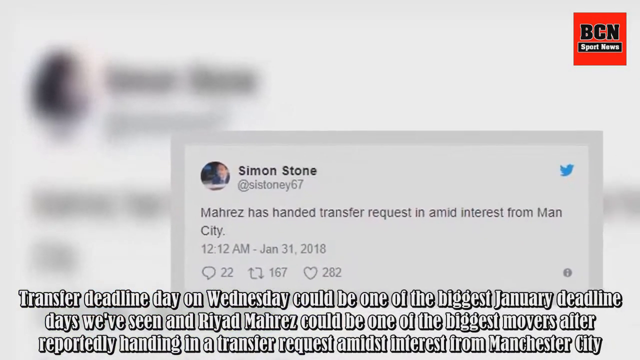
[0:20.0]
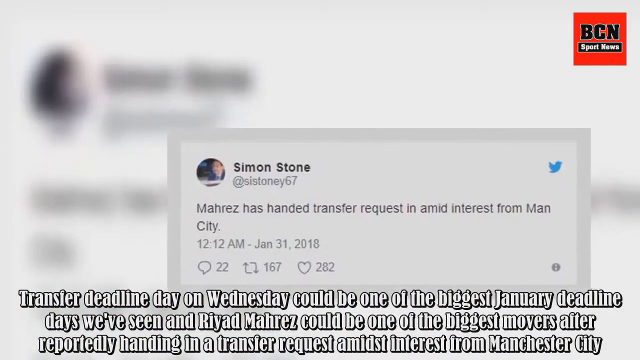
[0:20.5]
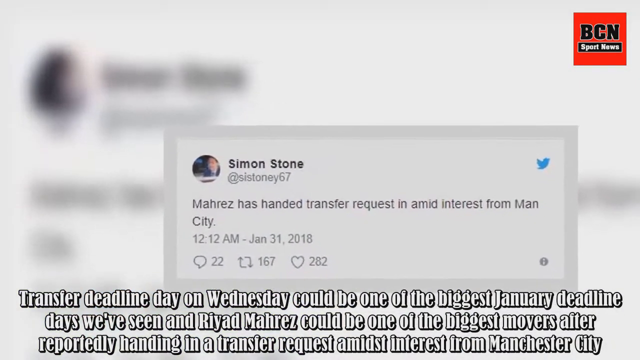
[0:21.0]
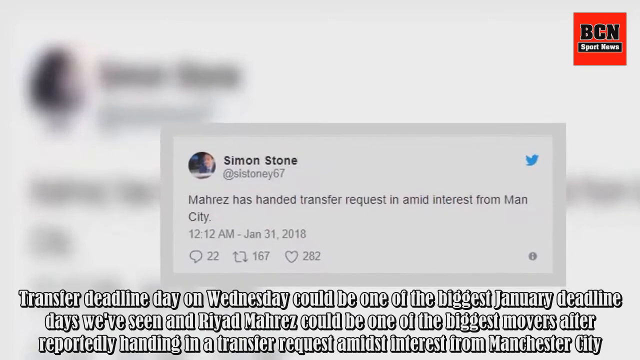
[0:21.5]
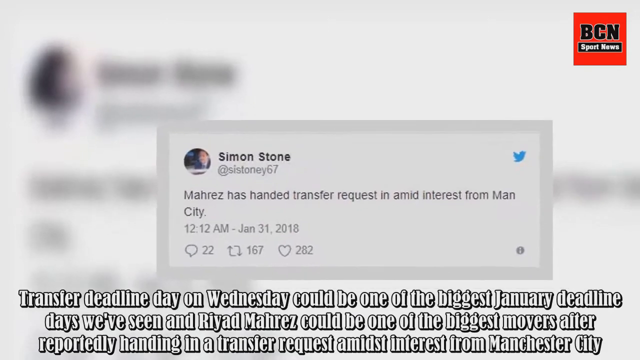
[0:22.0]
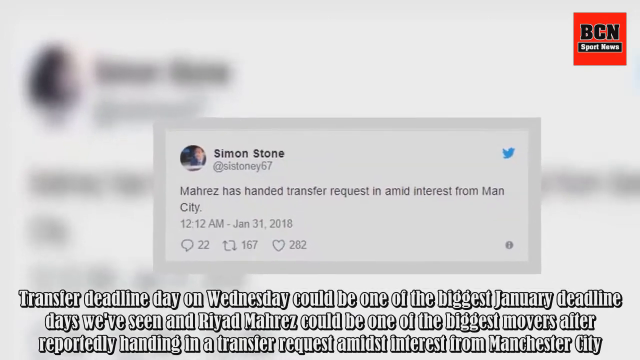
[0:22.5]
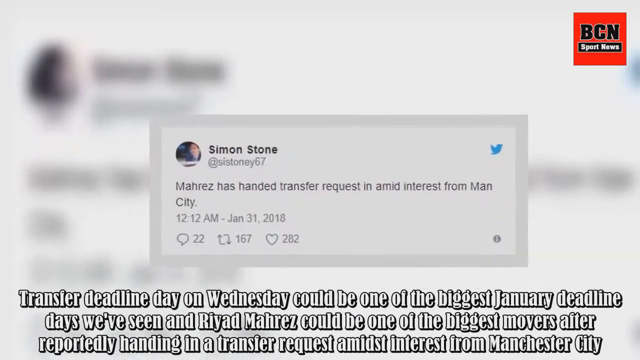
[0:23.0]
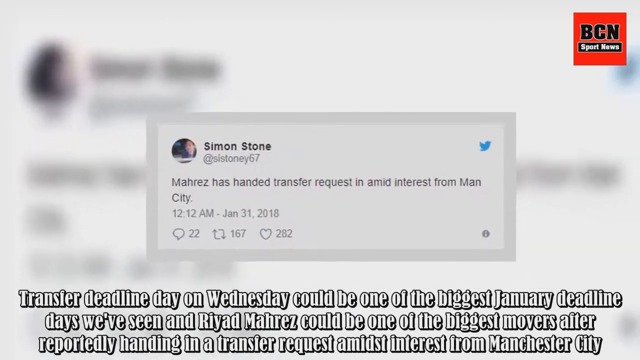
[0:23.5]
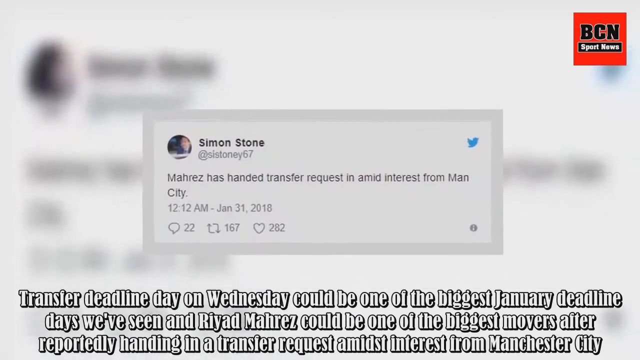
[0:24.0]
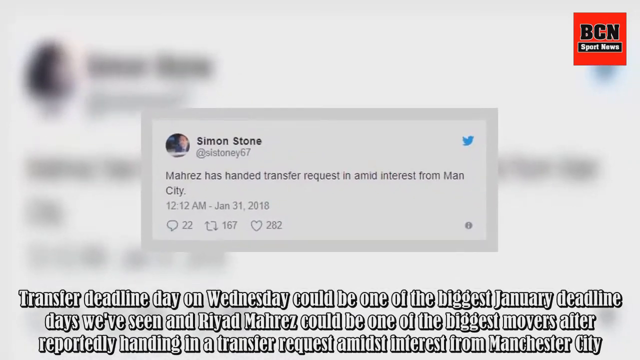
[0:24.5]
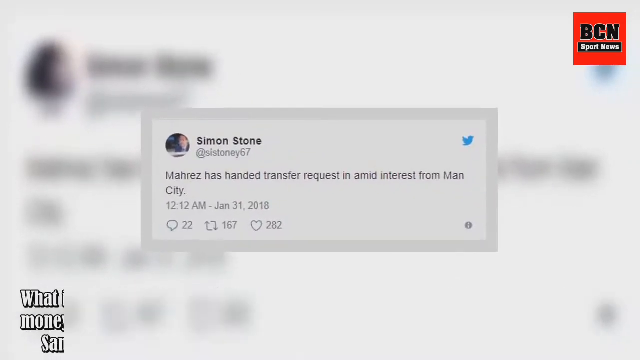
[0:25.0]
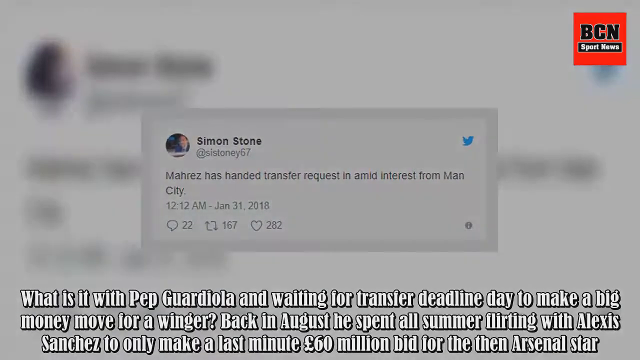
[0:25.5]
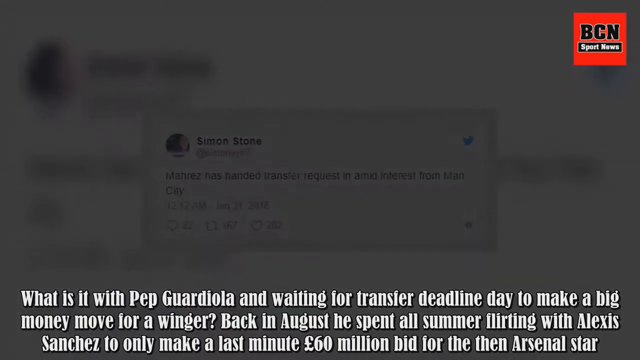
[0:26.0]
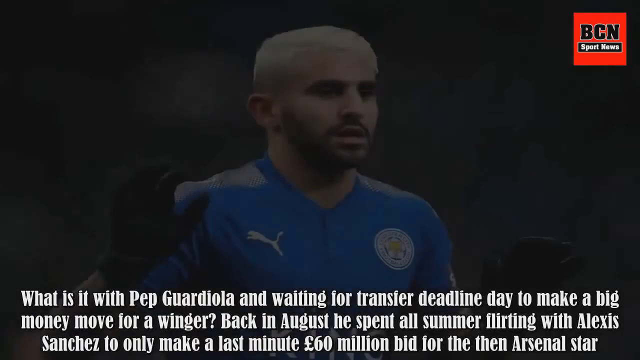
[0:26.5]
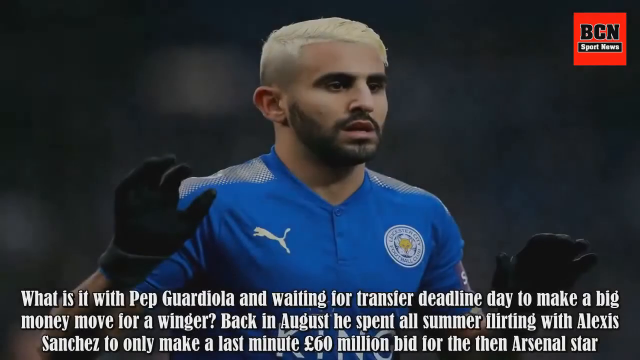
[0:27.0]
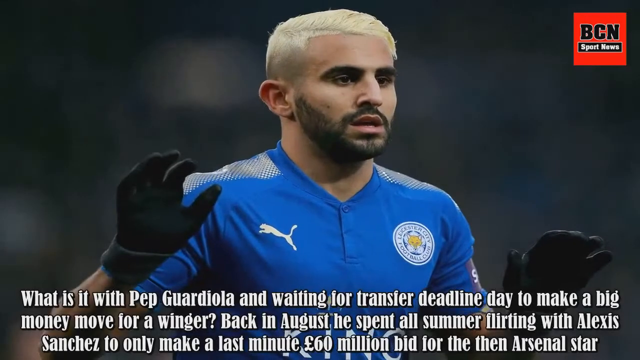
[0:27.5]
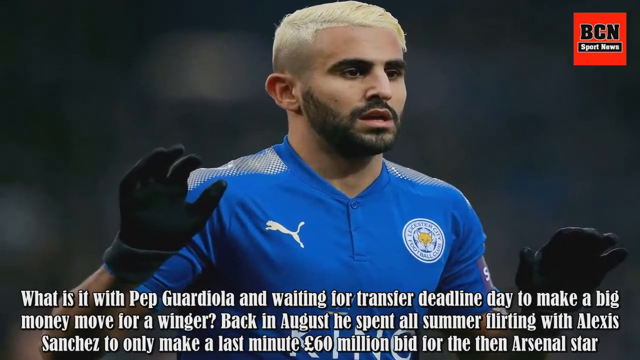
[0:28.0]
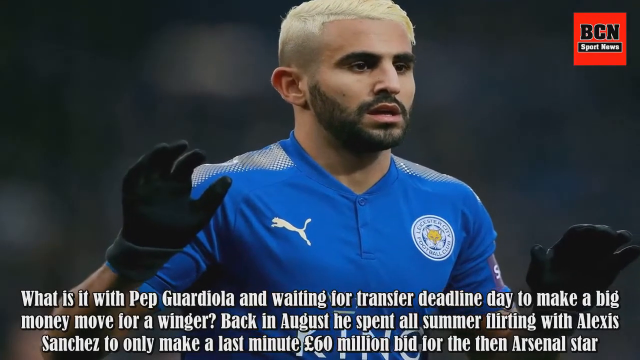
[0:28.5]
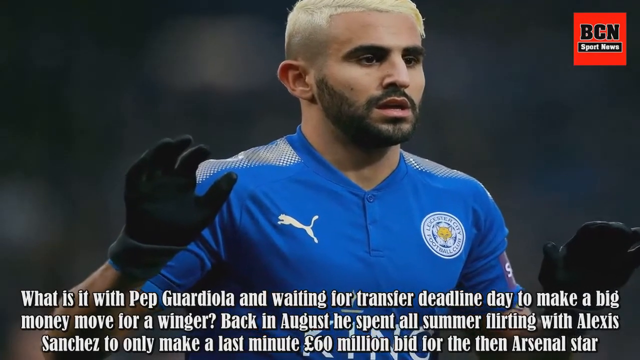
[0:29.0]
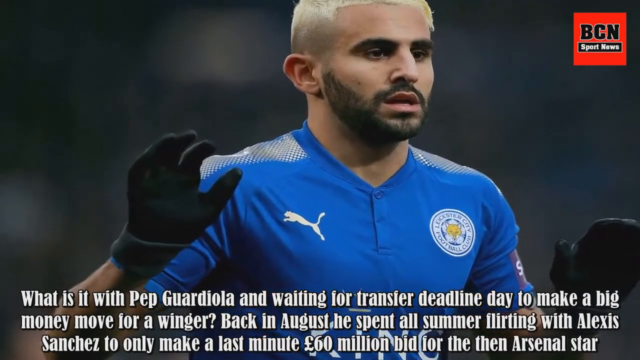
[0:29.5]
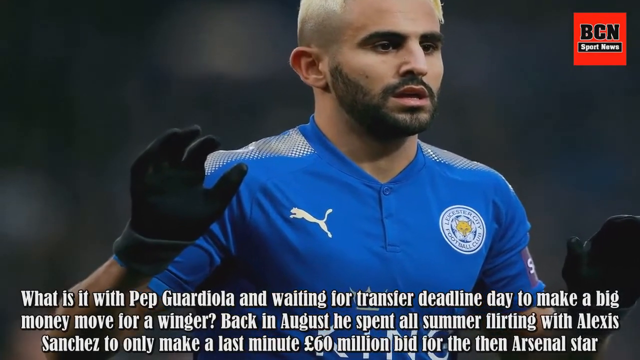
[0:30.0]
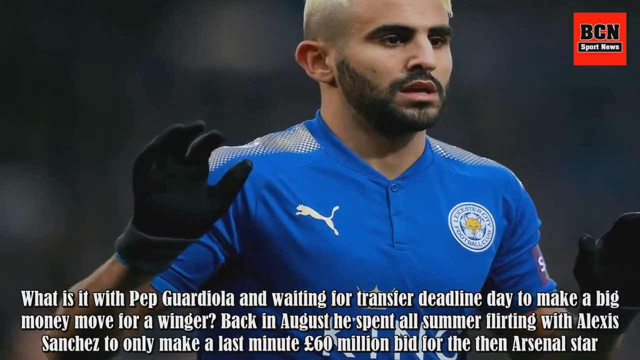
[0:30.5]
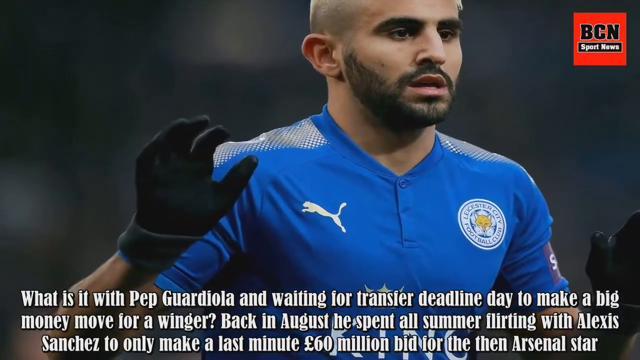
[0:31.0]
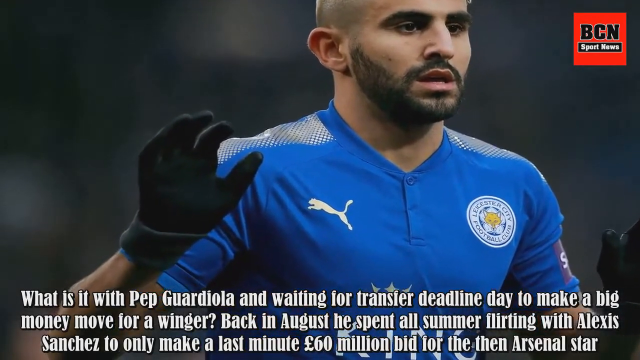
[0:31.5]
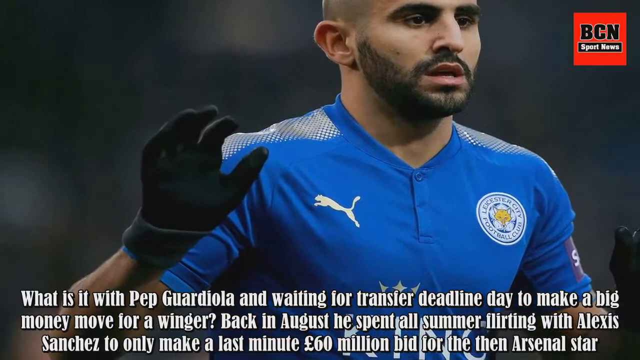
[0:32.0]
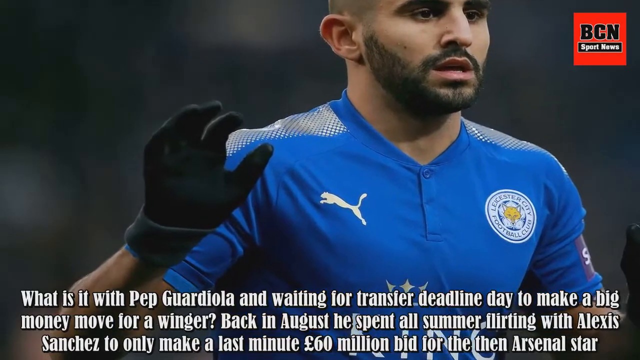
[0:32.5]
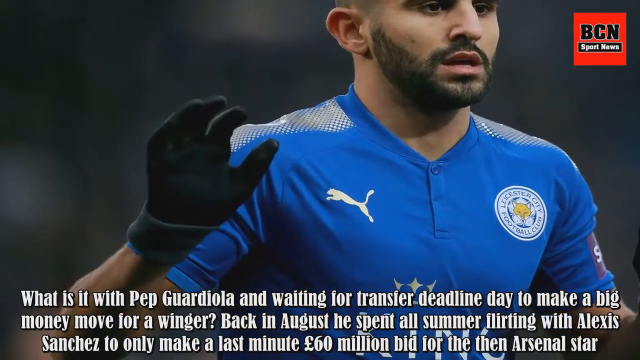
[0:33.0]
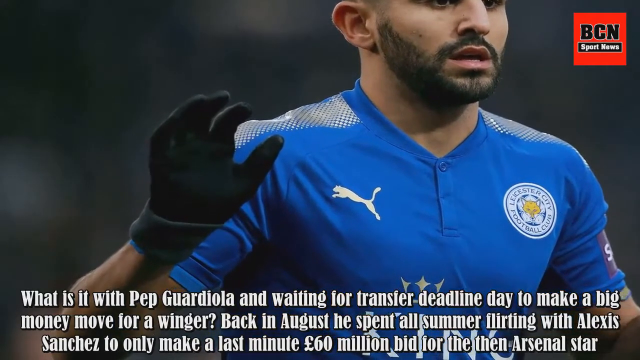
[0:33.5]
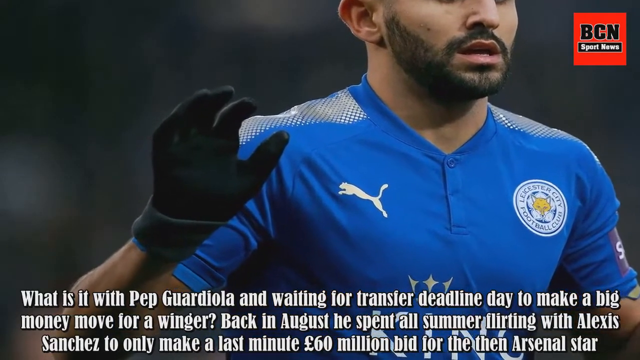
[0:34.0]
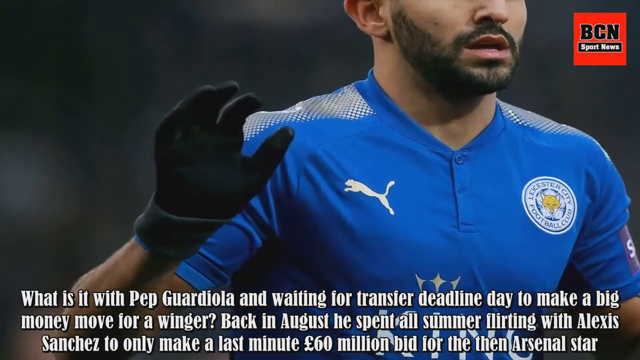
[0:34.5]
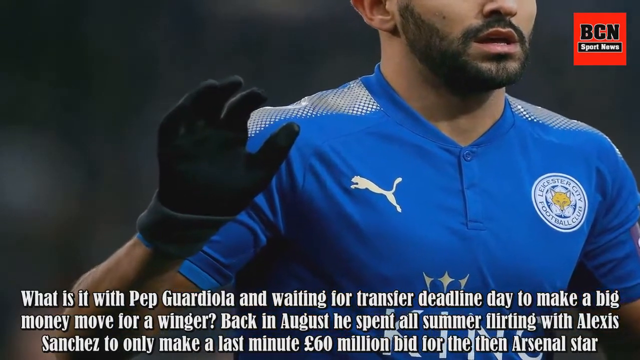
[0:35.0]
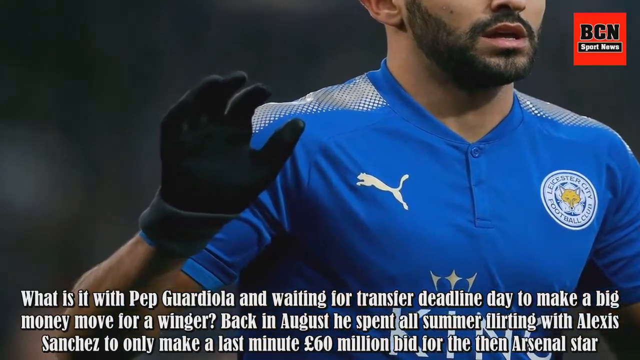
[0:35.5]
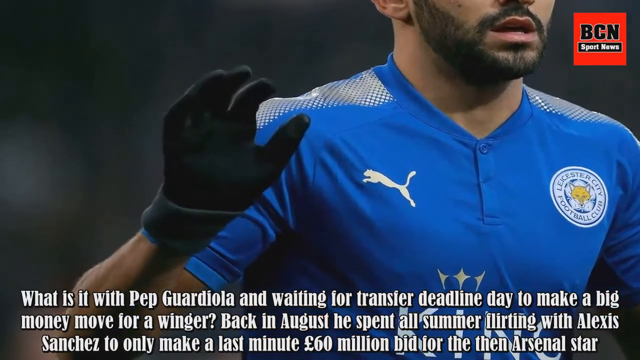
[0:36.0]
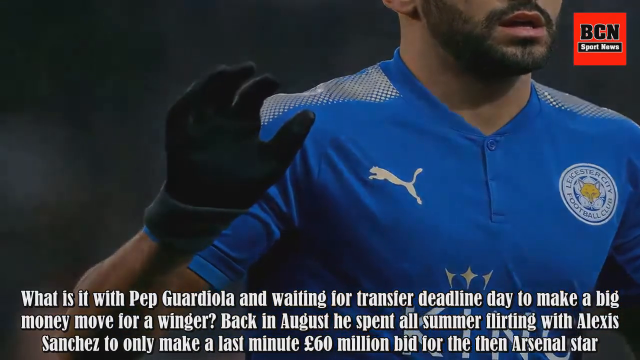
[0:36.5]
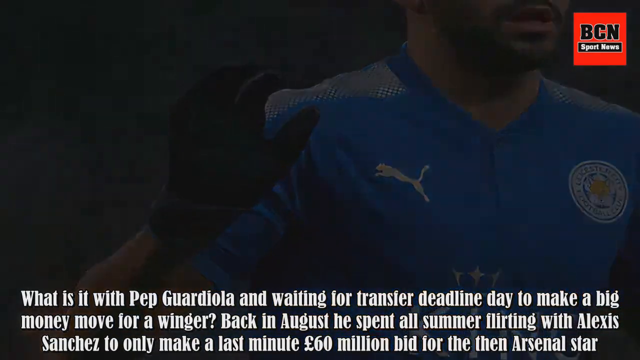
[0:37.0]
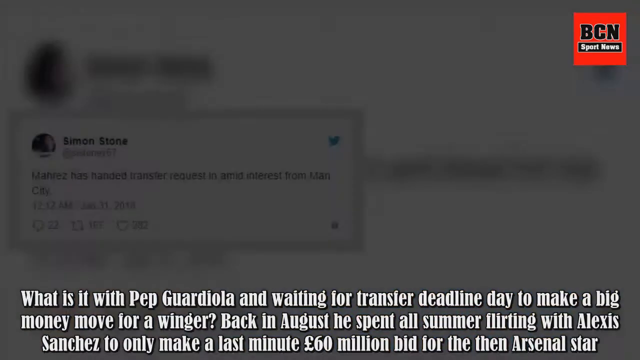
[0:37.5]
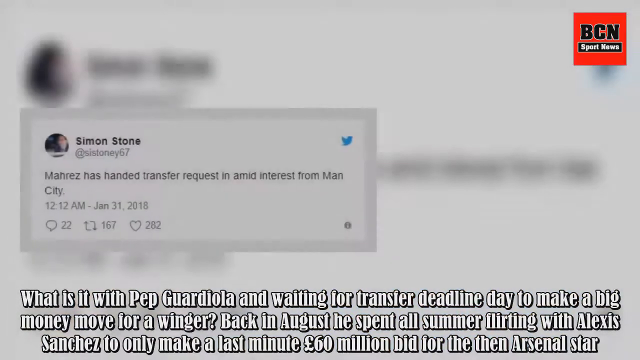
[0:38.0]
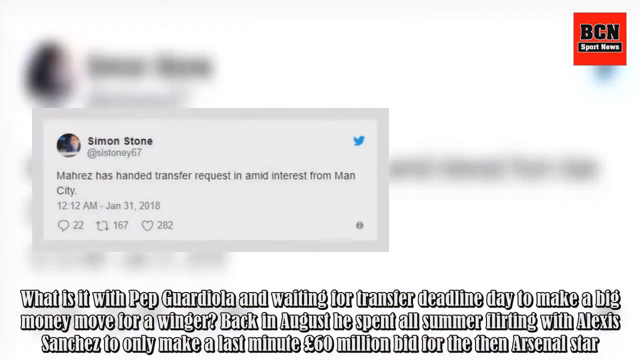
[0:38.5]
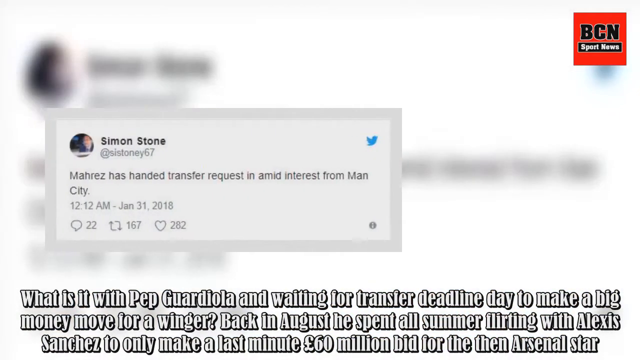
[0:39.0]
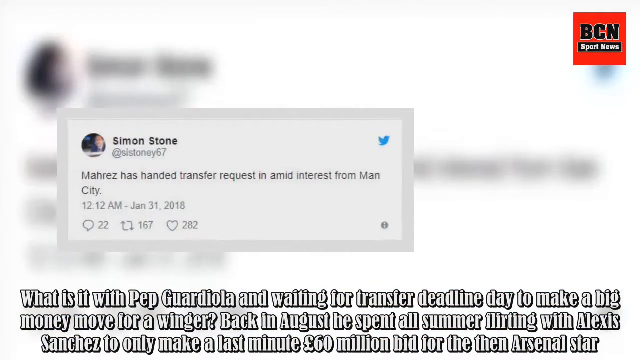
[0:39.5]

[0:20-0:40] On-screen text mentions the "transfer deadline on Wednesday" and says it could be one of the biggest January deadline moments, alongside a tweet about a transfer request and transfer interest. In the top right of the screen, "BCN Sports News" is written in black over a red square. As the tweets are shown, a soccer player with blonde hair and a beard appears on screen wearing a polo shirt. A Twitter logo is in the top right of each tweet.